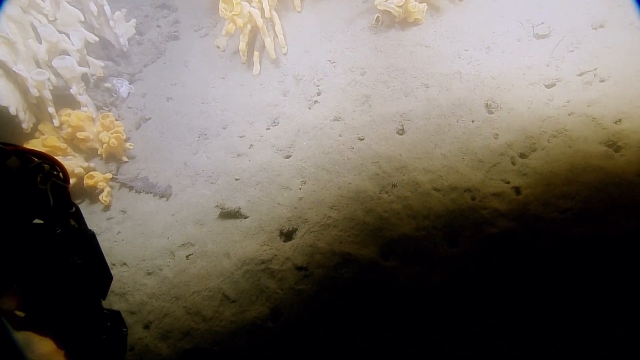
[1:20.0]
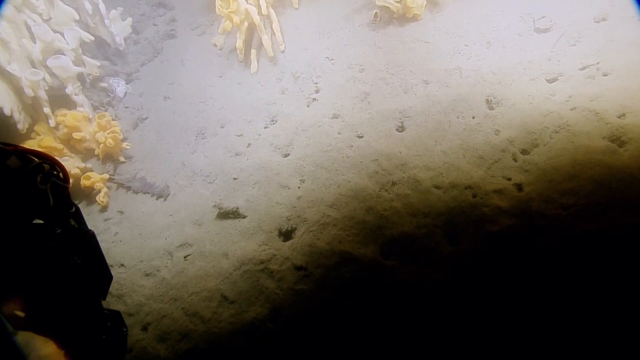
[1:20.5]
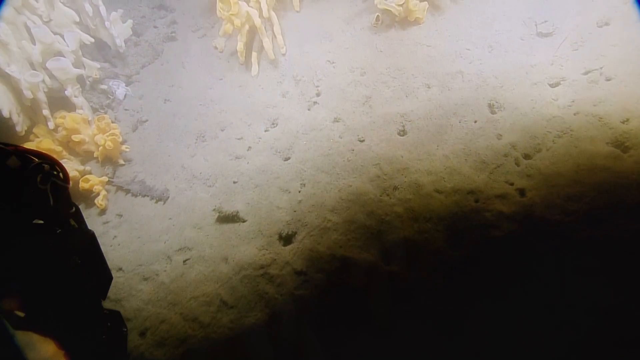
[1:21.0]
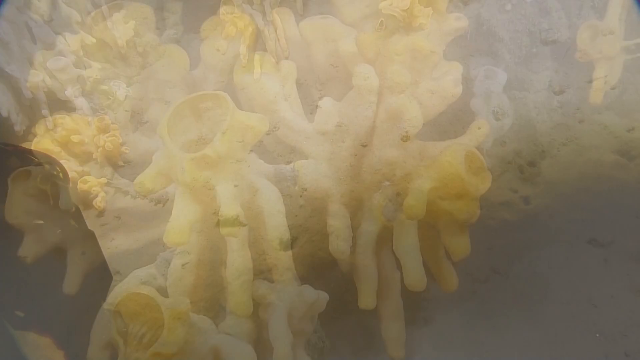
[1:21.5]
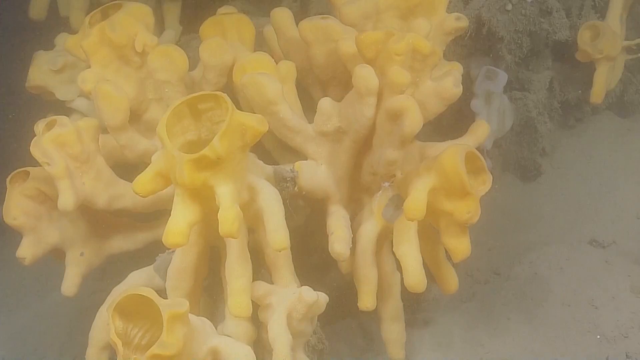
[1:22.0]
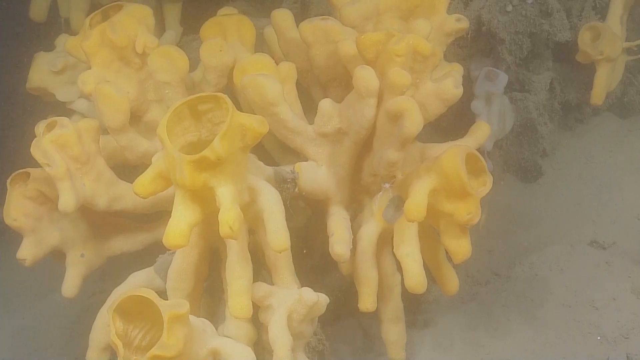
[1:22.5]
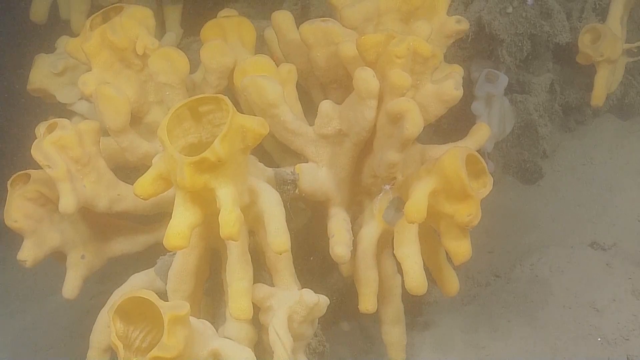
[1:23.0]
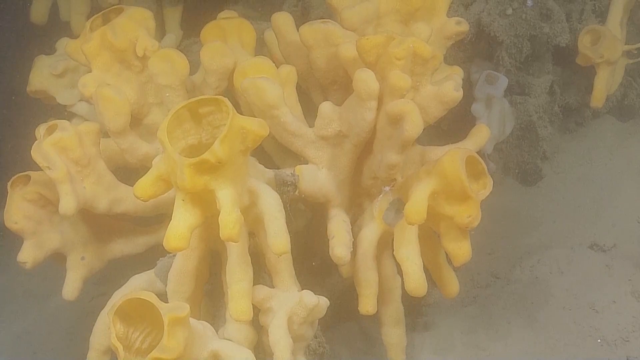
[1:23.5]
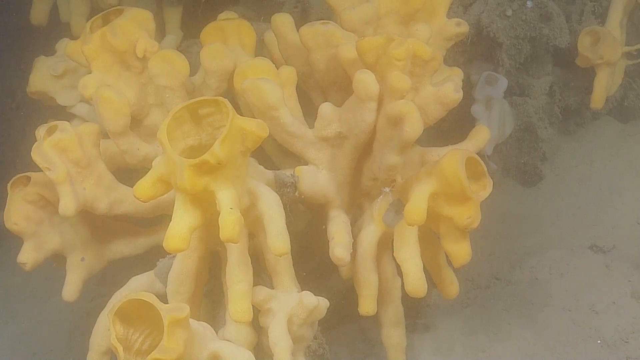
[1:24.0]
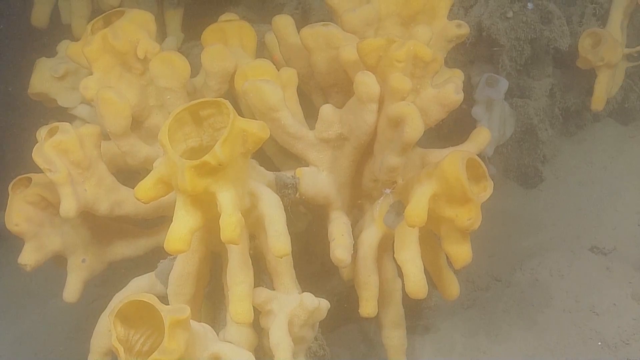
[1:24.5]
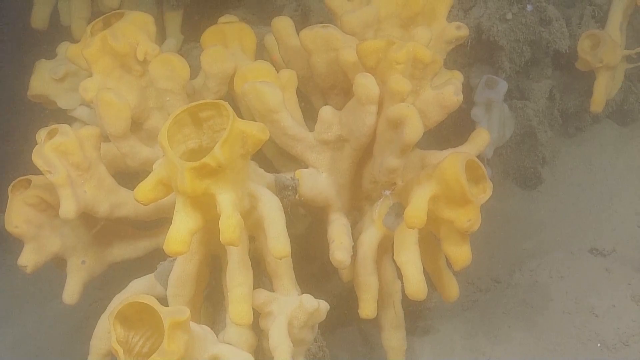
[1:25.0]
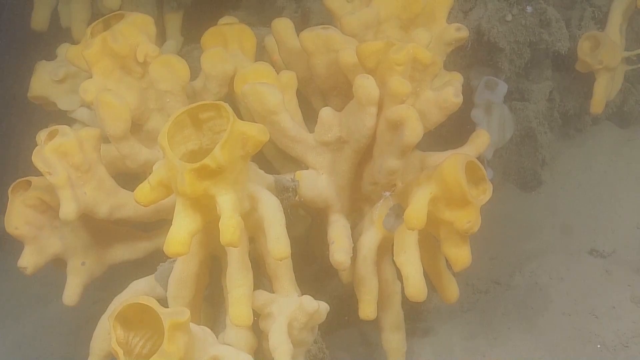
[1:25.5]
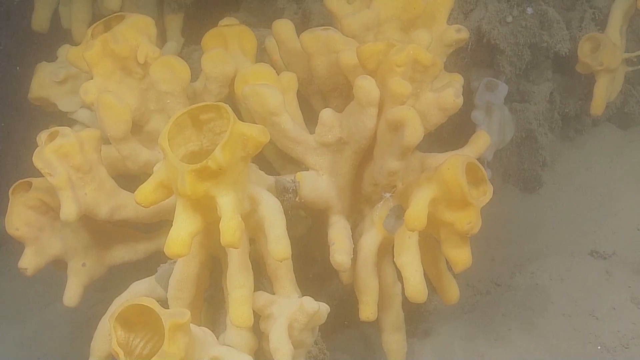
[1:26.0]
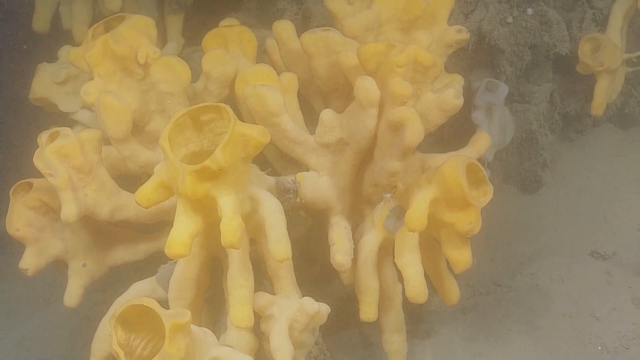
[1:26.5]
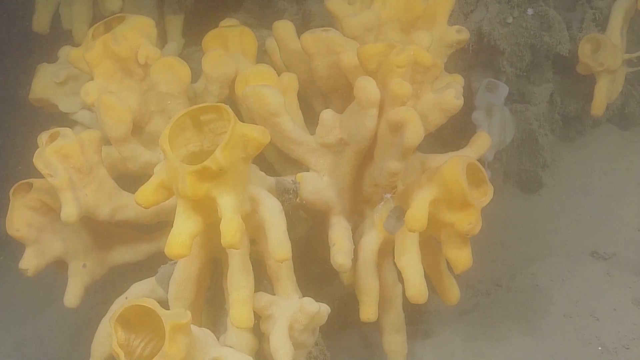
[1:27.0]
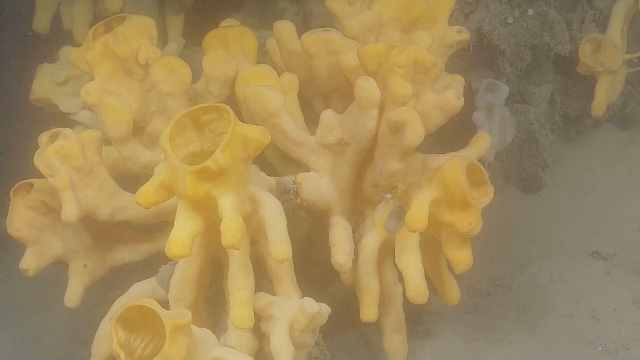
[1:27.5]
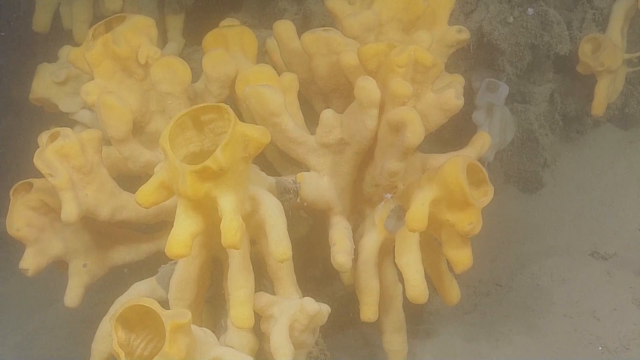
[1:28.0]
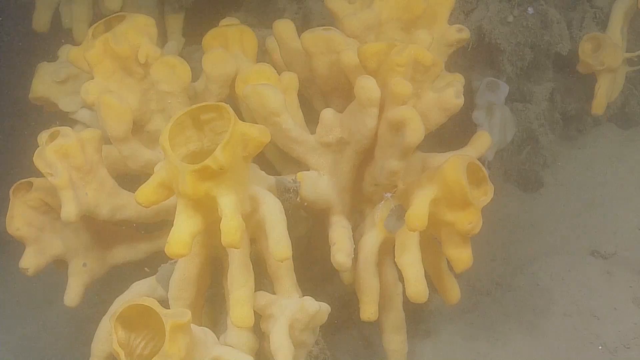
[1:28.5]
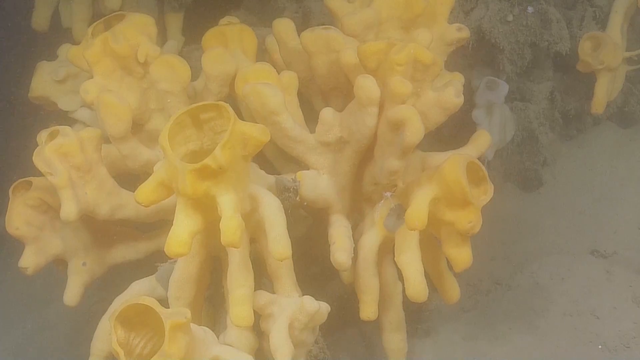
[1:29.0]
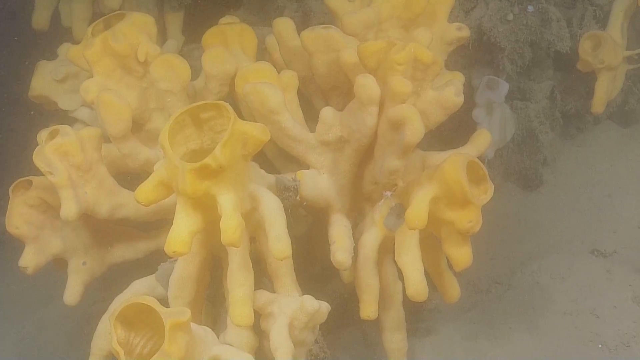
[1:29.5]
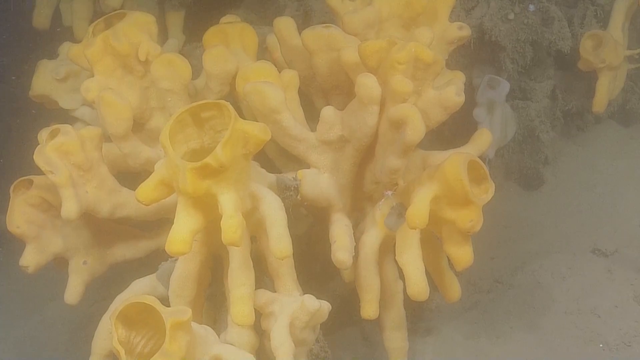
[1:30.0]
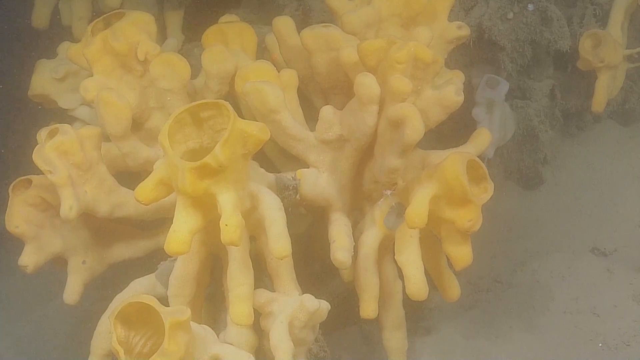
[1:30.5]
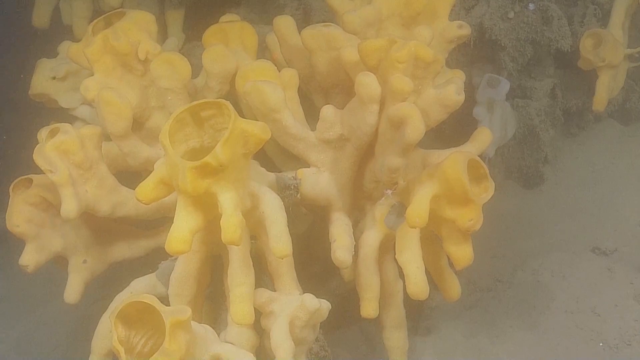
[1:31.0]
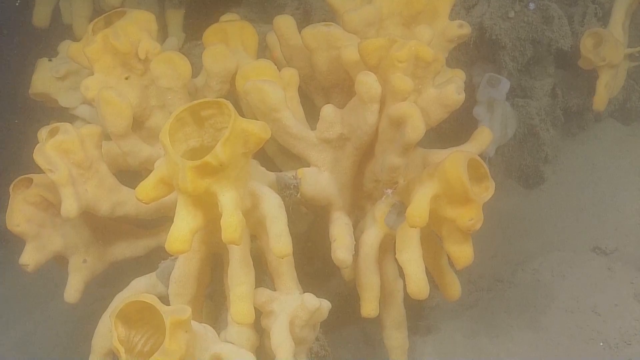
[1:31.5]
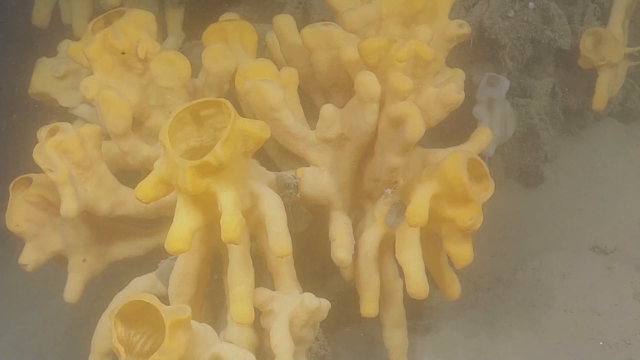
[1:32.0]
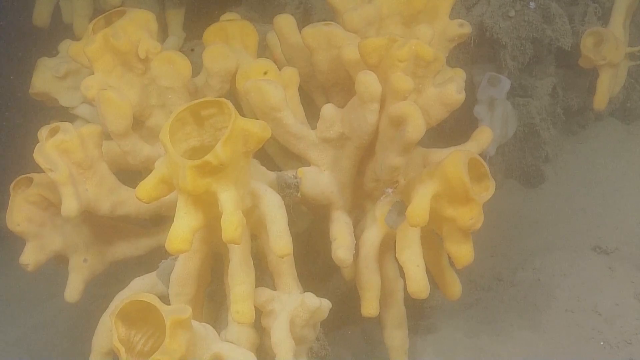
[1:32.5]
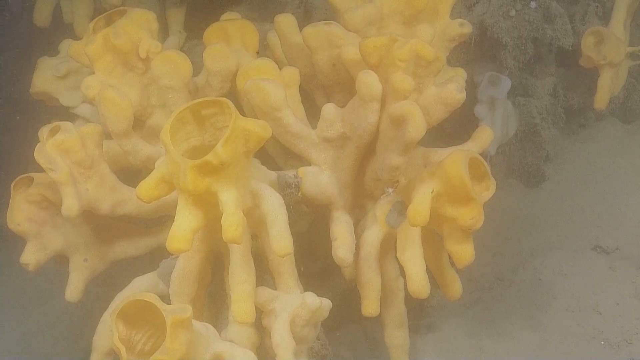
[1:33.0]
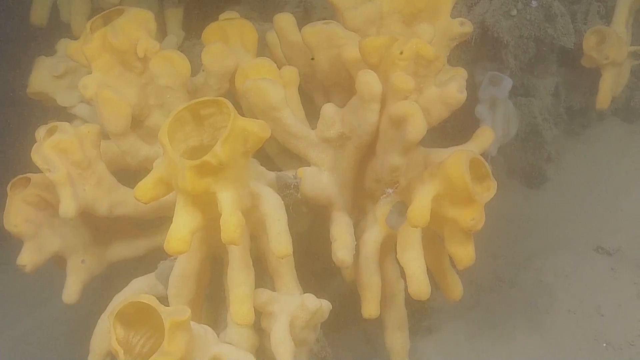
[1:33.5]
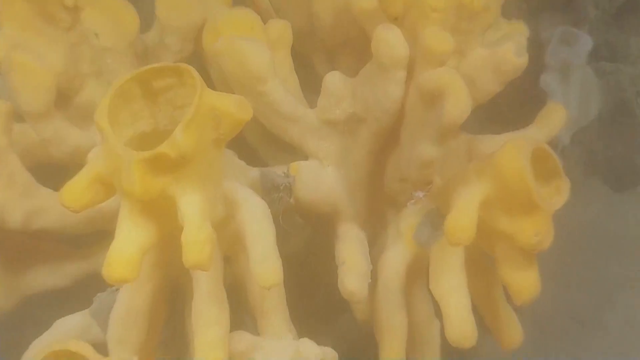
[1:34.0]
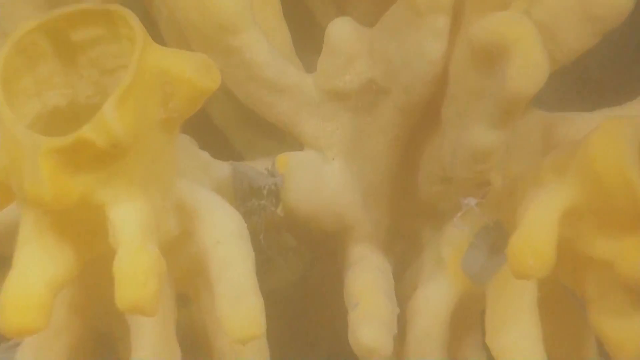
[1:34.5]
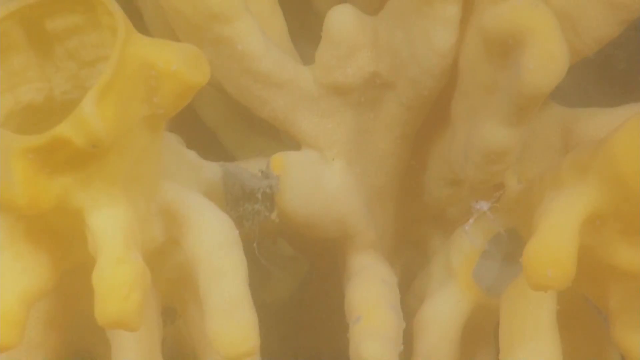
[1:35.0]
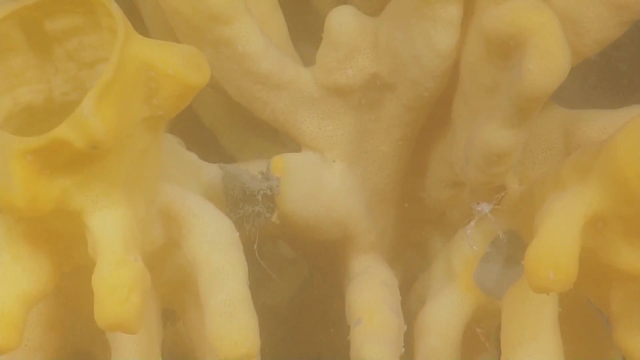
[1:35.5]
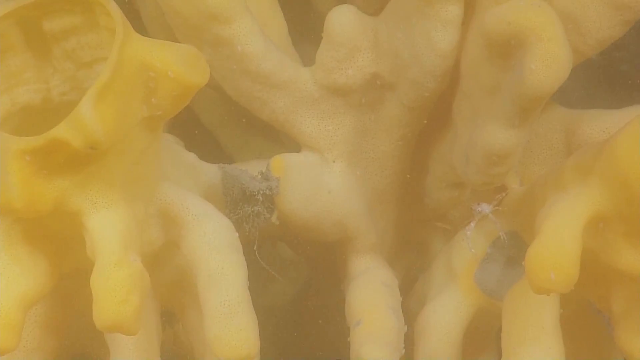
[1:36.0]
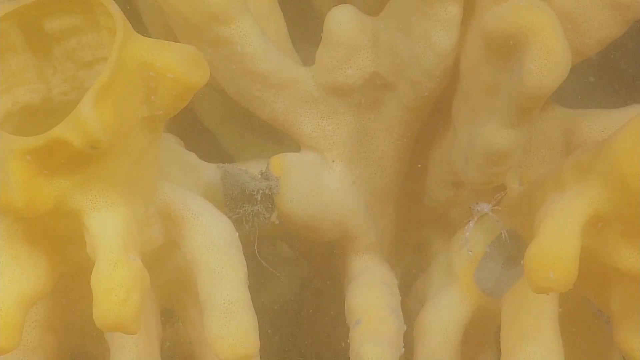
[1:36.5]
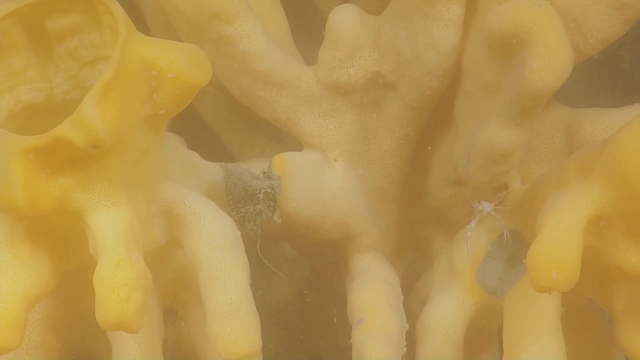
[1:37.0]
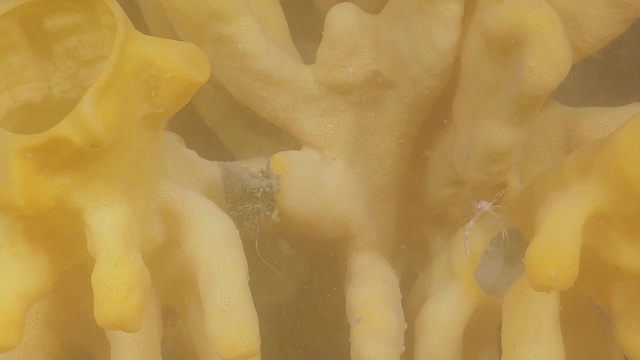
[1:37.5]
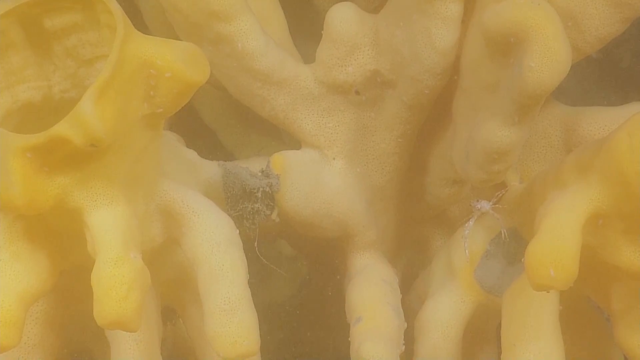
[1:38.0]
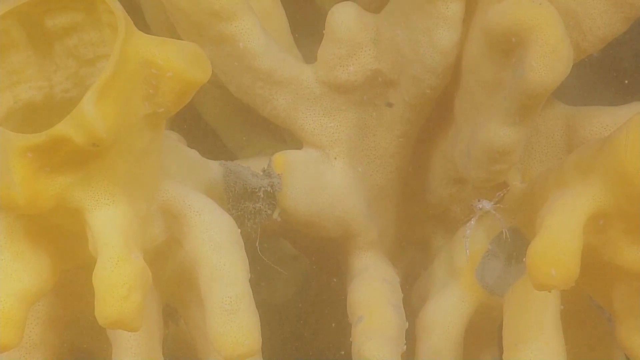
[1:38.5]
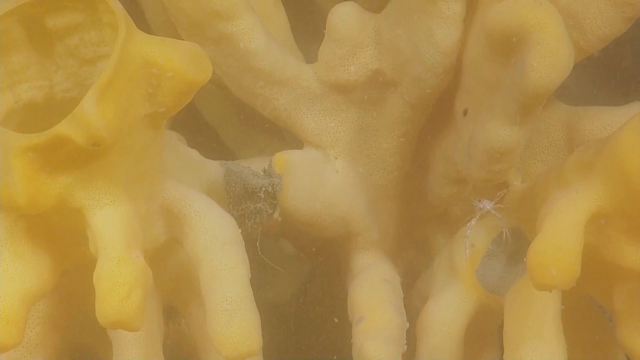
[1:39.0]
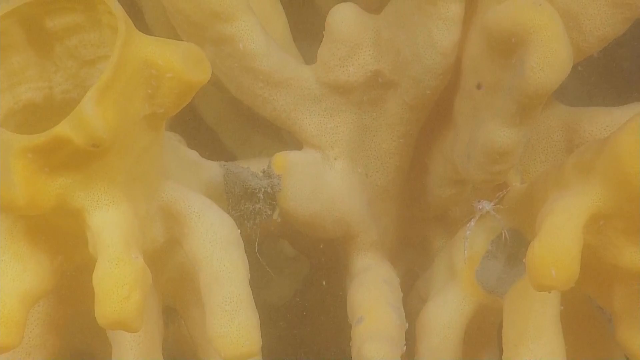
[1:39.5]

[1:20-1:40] The camera shows the sandy floor, with coral at the top of the screen: white coral at the top left and a little white-orange coral at the top center. The sand in the background is white. The bottom right of the screen is black with an orange border, showing the shadow of the submarine, and the submarine's black camera is visible in the bottom left corner. The camera zooms in somewhat and then immediately transitions to an extreme close-up of yellow and light-orange coral. A hole is visible at the top of the coral, and the camera zooms up slowly as it floats. Little microorganisms swim by from left to right. The camera zooms in extremely closely; the coral looks more white and yellow, and even smaller microorganisms swim into the shot in the cloudy water. The coral seems to have gray 'joints'.